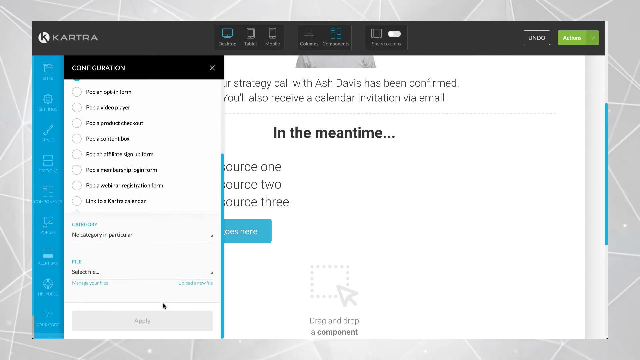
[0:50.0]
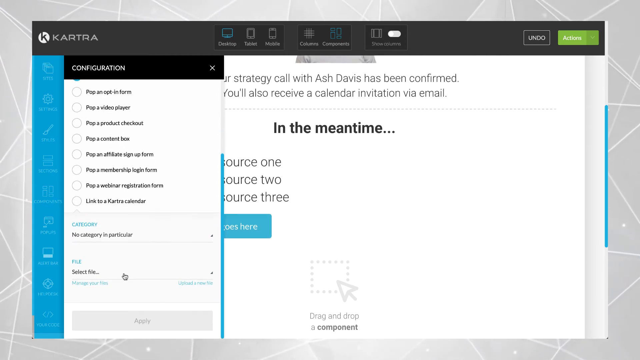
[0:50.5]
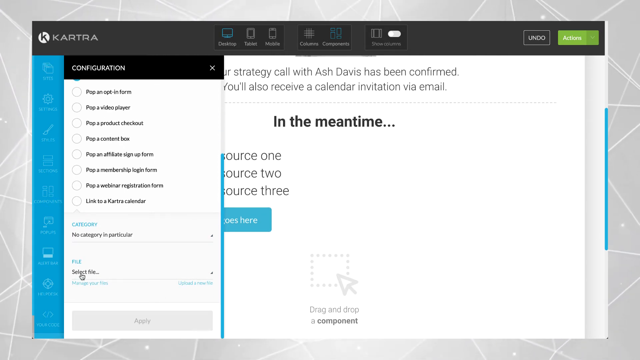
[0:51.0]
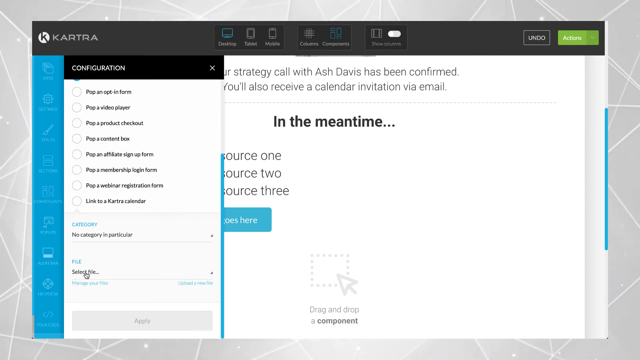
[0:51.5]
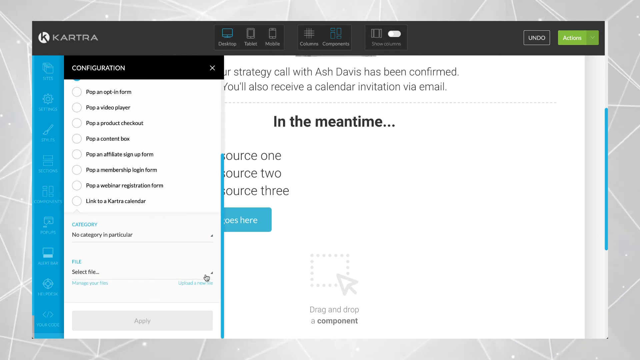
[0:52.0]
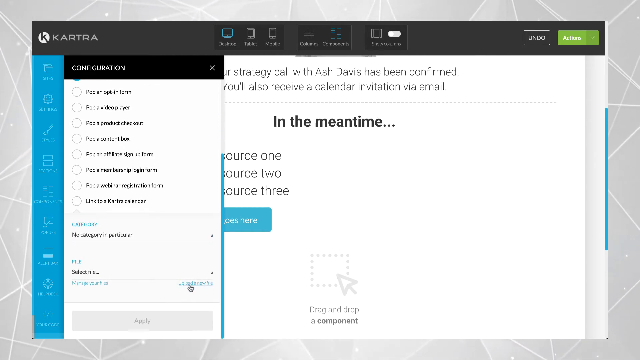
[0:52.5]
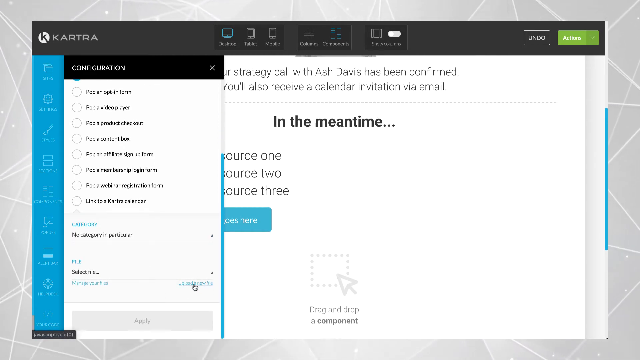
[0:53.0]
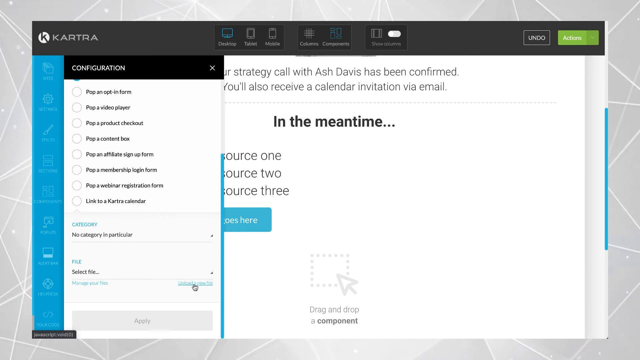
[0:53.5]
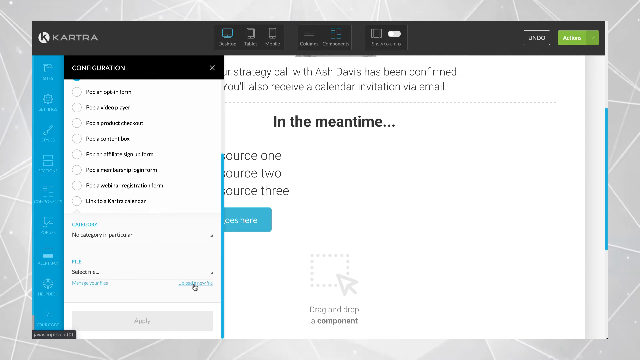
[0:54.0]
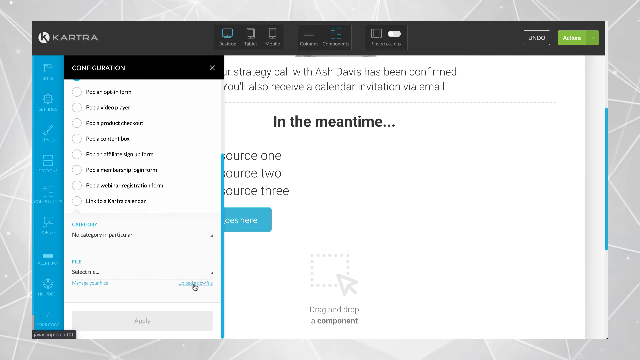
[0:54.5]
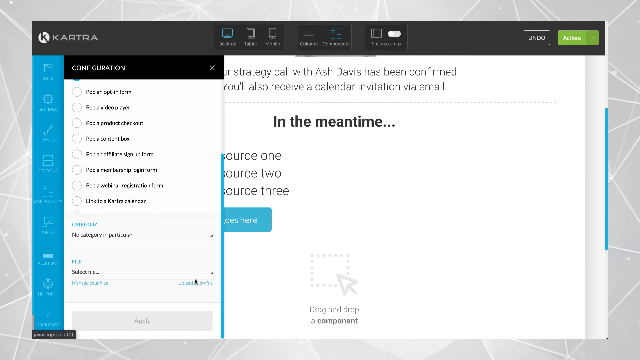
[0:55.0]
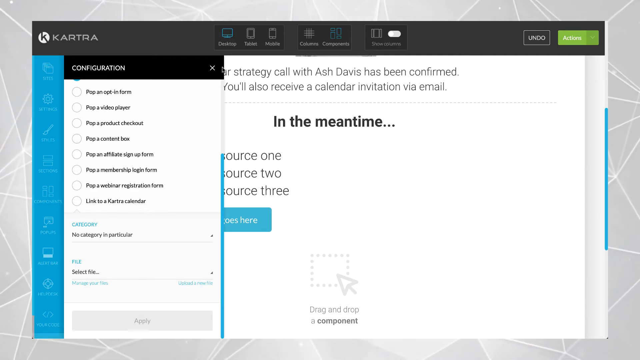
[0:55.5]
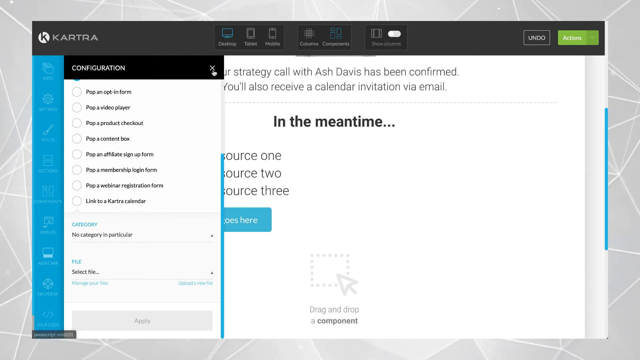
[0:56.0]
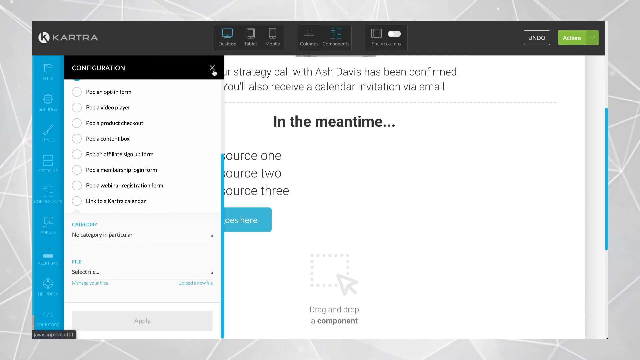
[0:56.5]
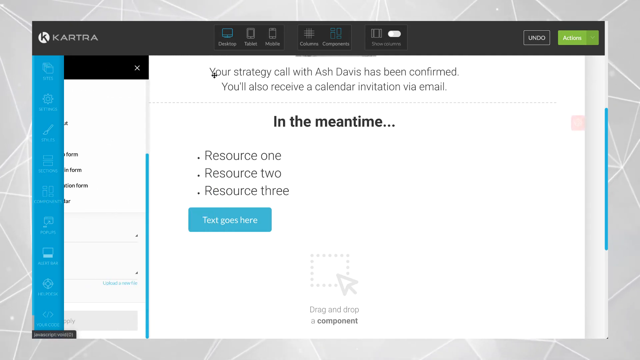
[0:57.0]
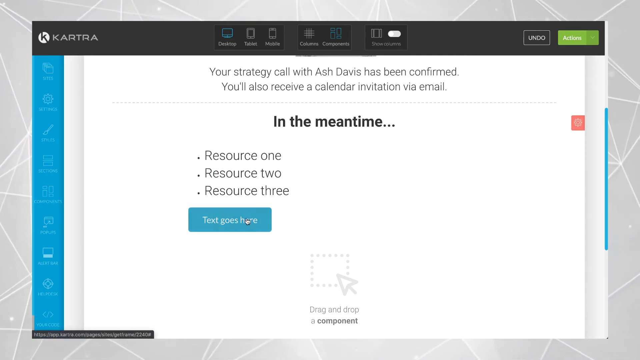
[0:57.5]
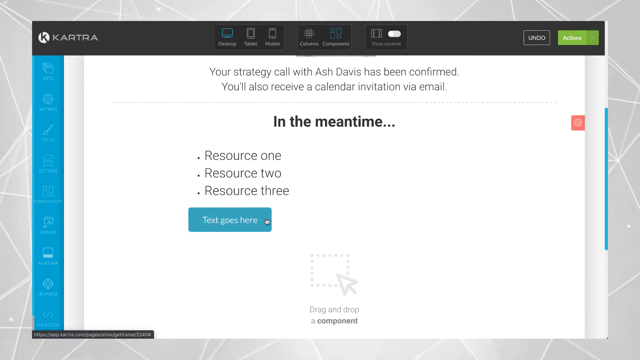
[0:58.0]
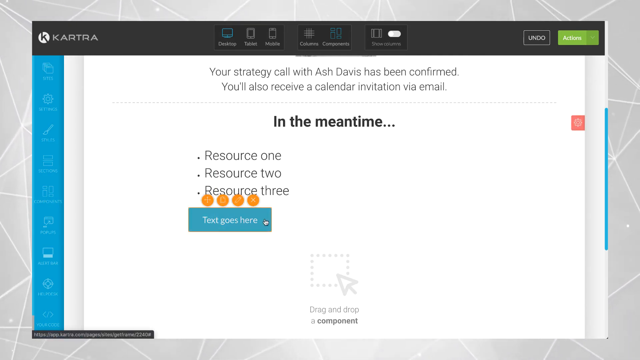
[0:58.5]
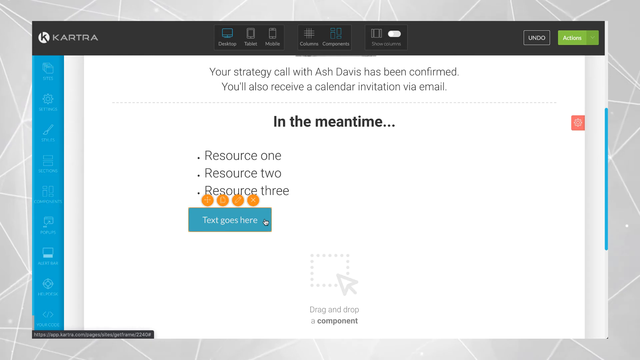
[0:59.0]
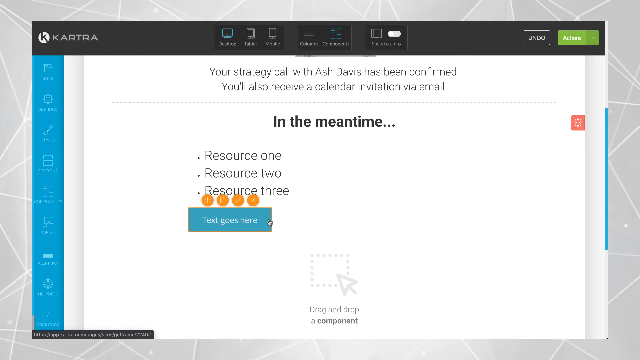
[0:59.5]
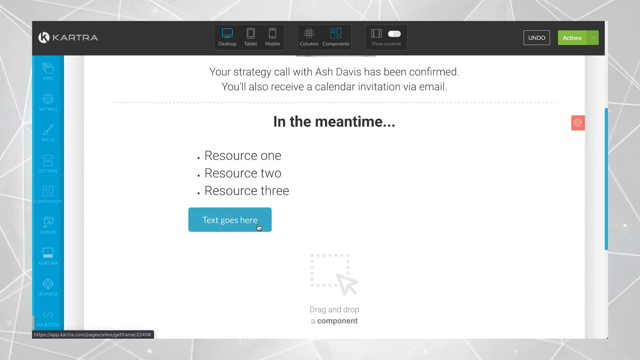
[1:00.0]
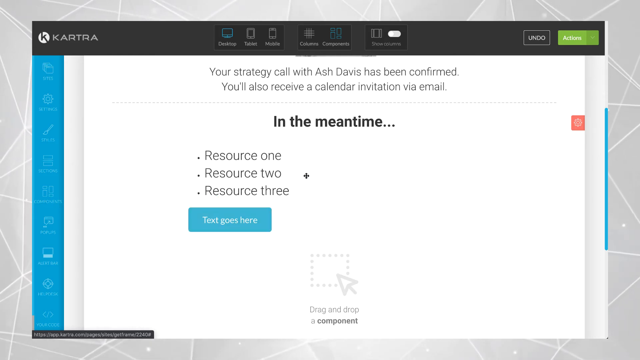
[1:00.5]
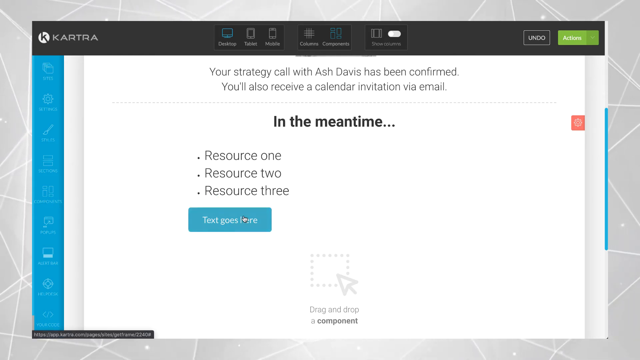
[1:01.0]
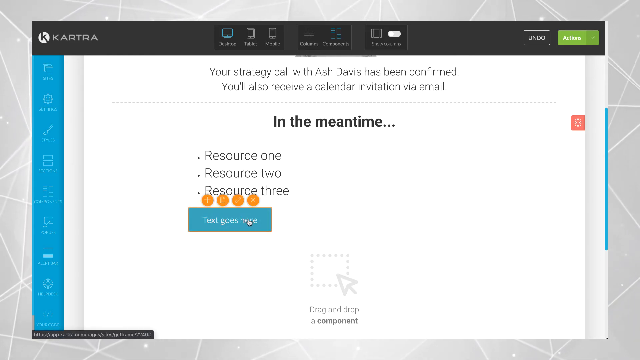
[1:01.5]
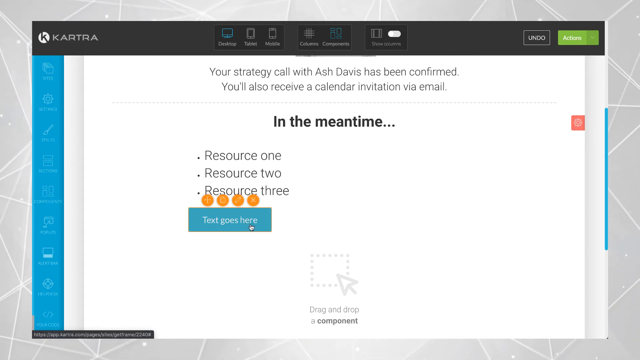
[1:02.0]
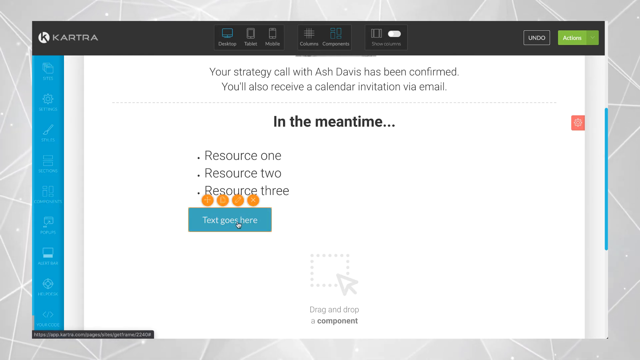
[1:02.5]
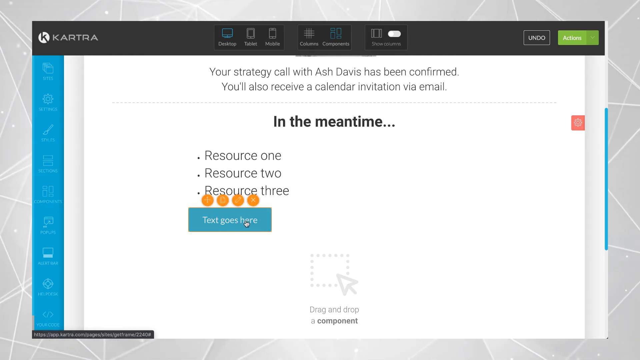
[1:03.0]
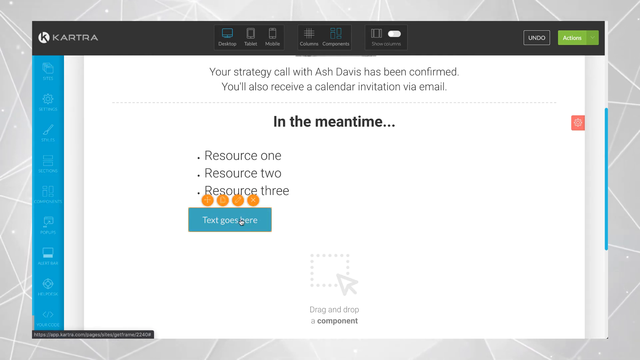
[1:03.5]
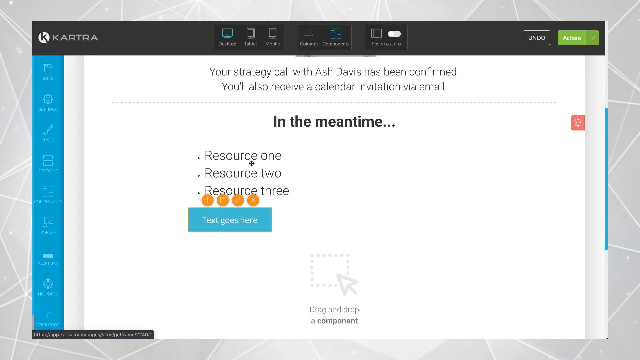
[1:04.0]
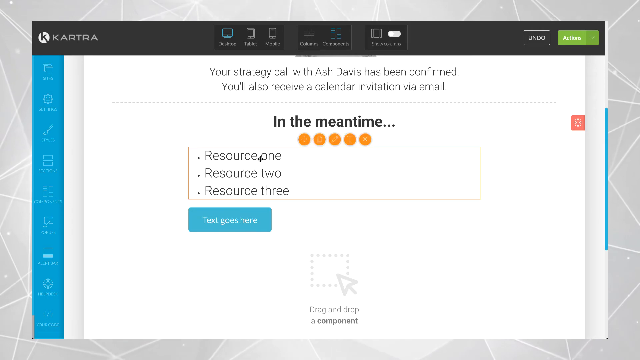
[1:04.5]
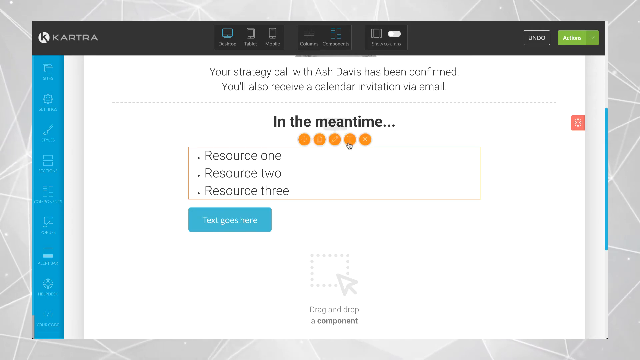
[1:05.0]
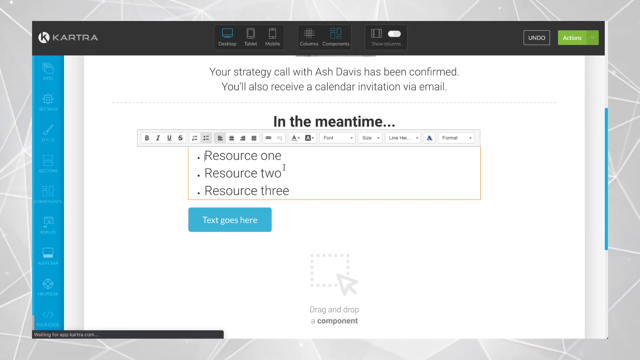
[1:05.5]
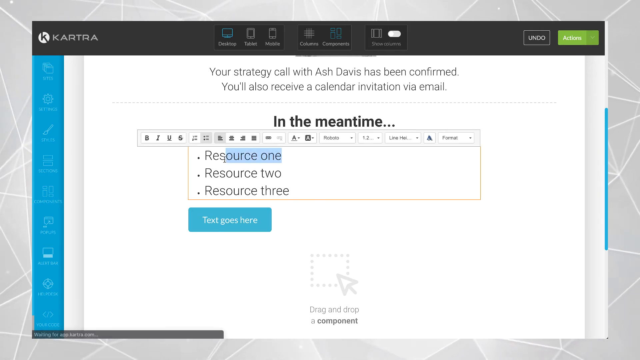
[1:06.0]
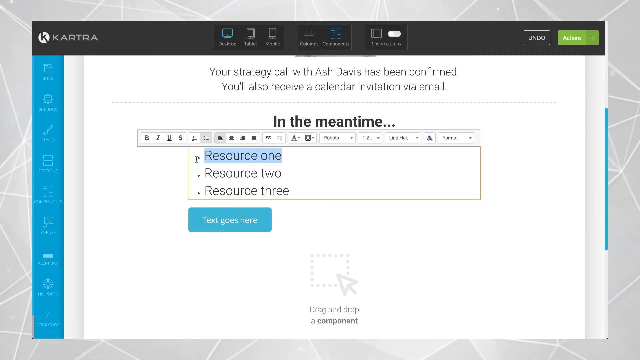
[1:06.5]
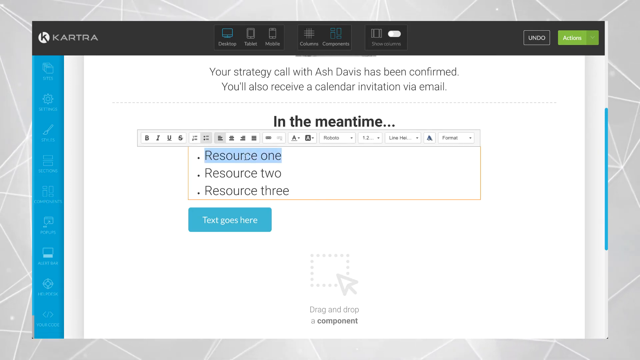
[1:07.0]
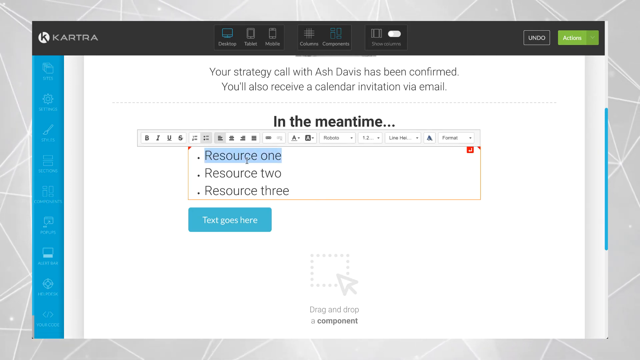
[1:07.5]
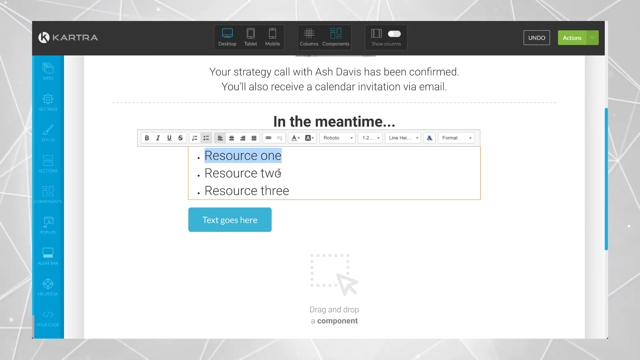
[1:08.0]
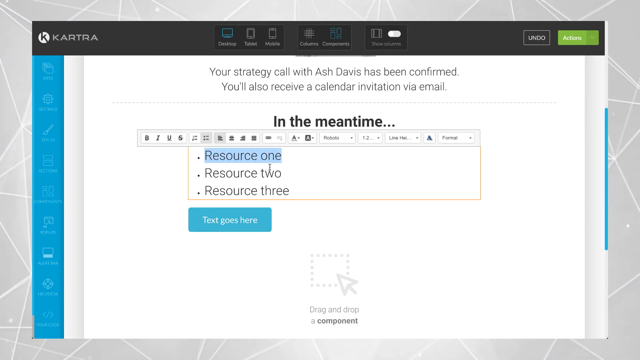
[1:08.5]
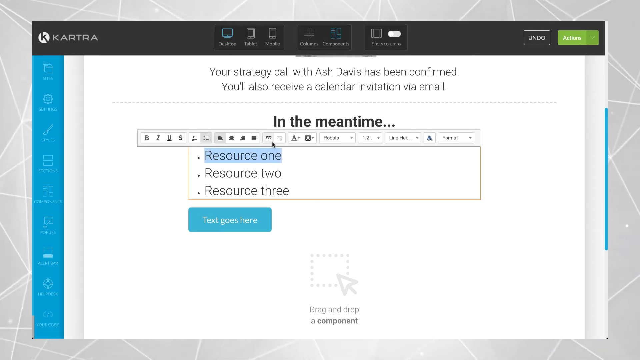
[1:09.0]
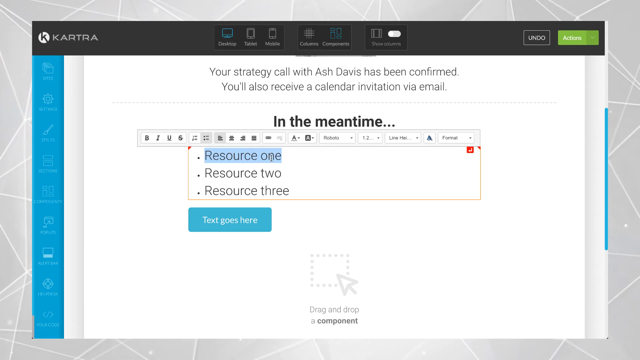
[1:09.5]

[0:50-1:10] The website is primarily white, with the brand Kartra at the top left. A screen is pulled up on the left side that says "Configuration." The mouse moves to where it says "File," then just below that, then all the way up to "Configuration" at the top of the heading. The X is highlighted and the screen is closed. The mouse then goes to the box that says "Text goes here" and clicks there, swirls around, and goes to the section above it, which has three lines of text: "Resource 1," "Resource 2," "Resource 3." Resource 1 is highlighted, and then that section is done. The editing basically goes back and forth on this portion of the page.